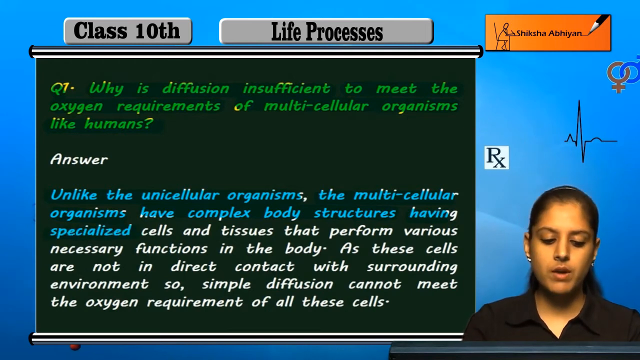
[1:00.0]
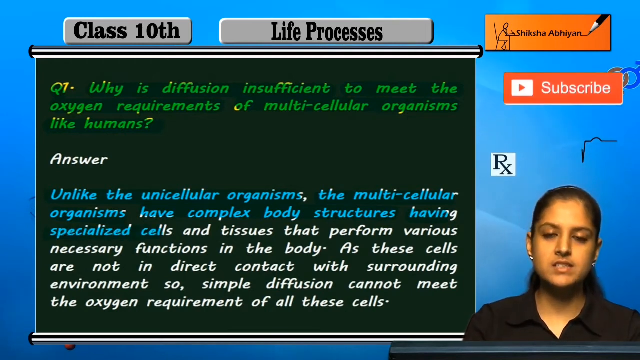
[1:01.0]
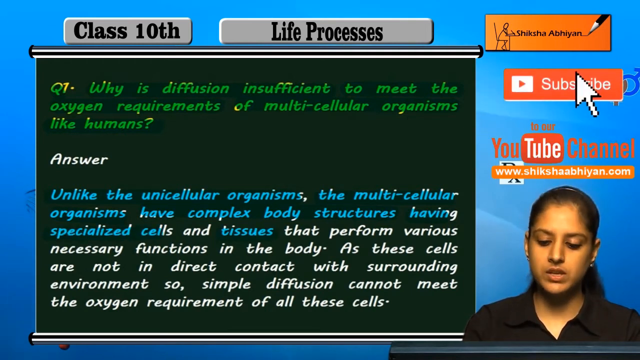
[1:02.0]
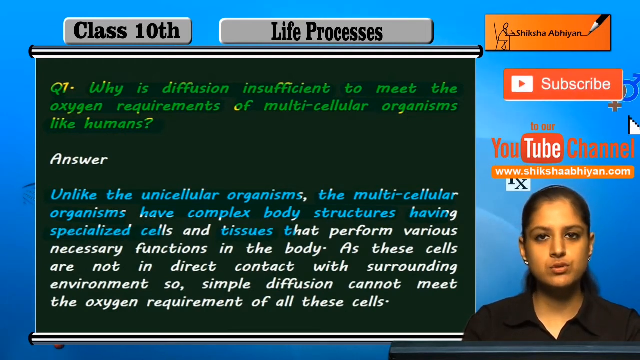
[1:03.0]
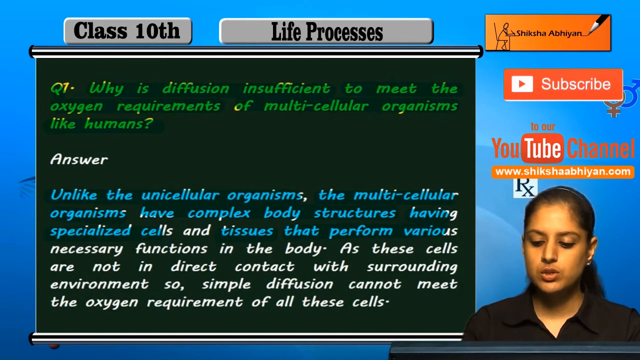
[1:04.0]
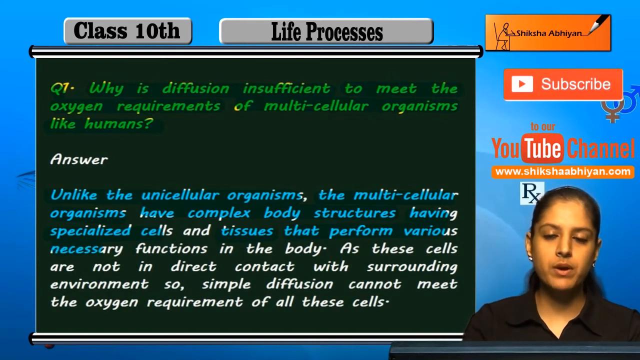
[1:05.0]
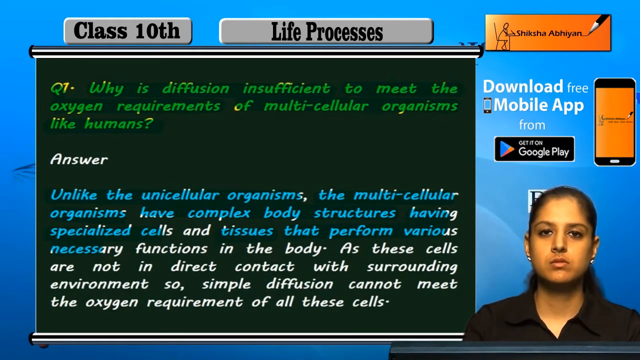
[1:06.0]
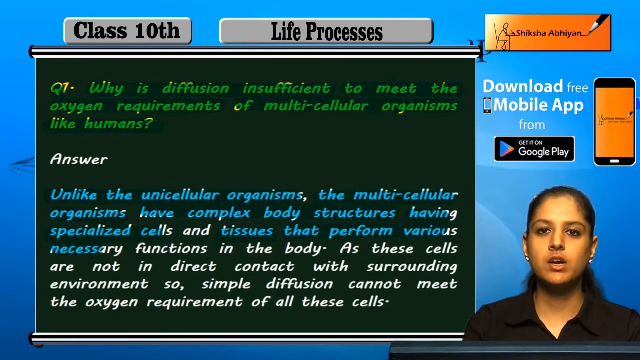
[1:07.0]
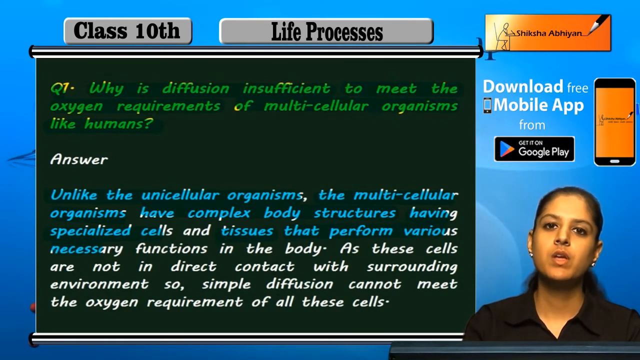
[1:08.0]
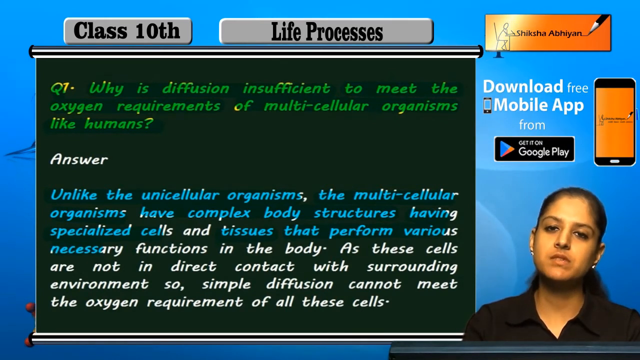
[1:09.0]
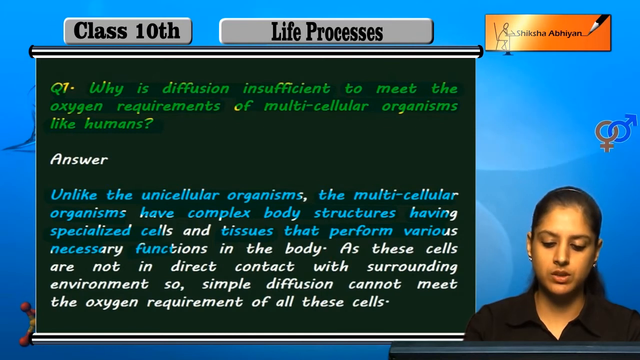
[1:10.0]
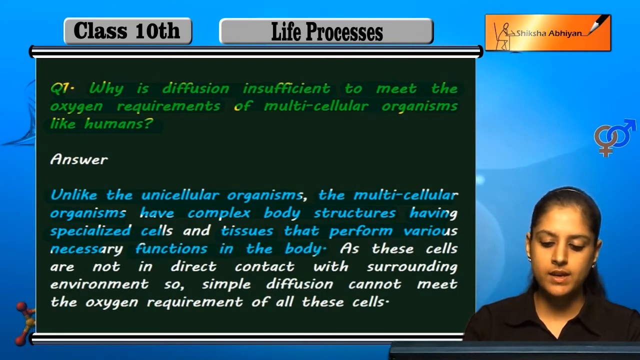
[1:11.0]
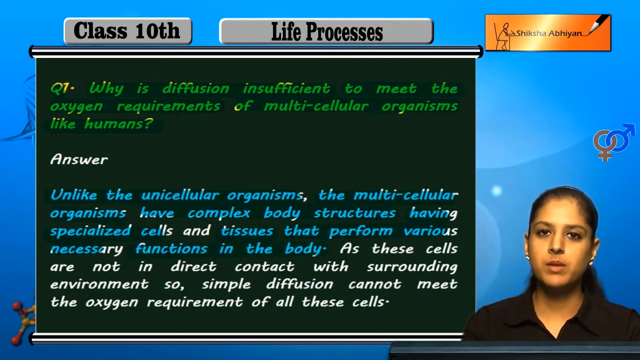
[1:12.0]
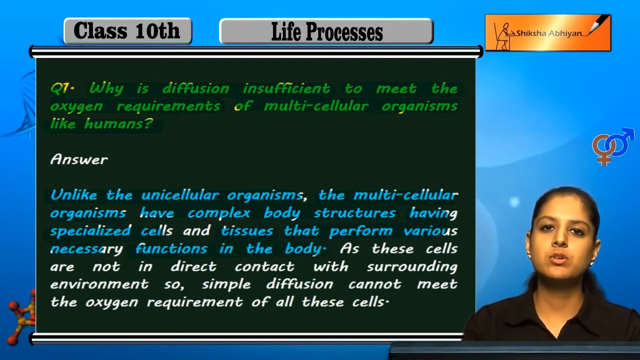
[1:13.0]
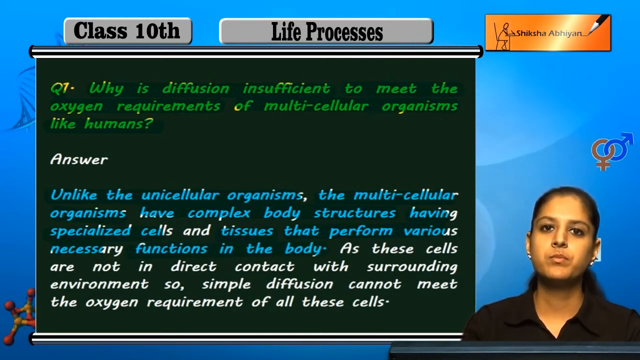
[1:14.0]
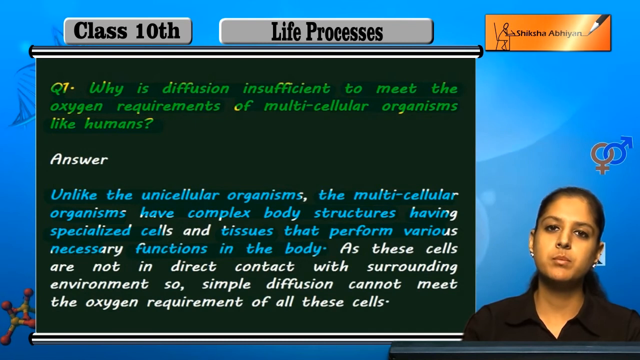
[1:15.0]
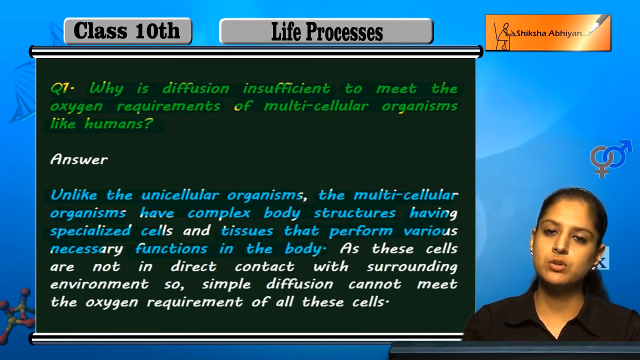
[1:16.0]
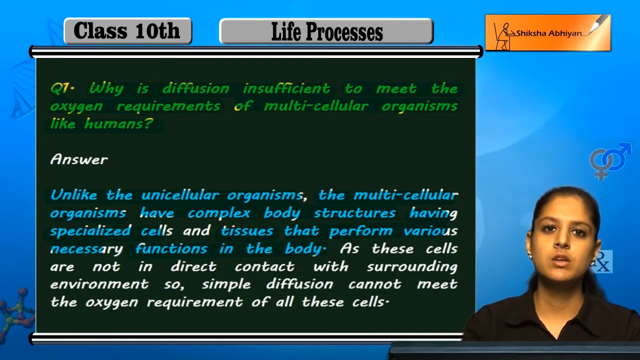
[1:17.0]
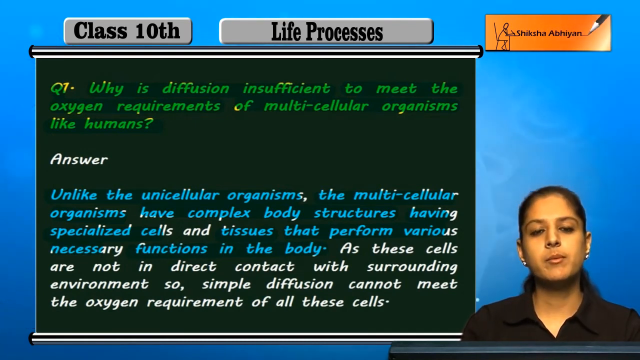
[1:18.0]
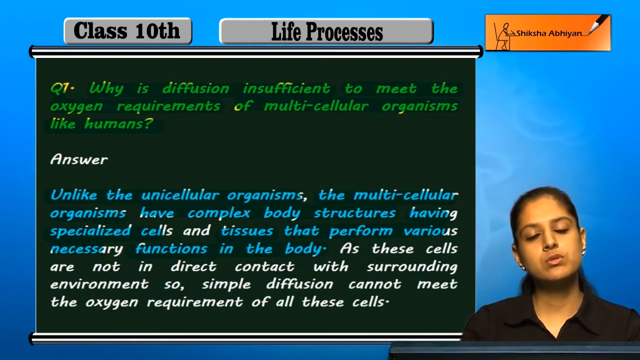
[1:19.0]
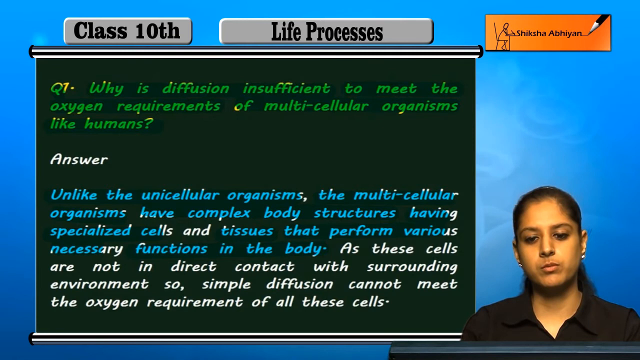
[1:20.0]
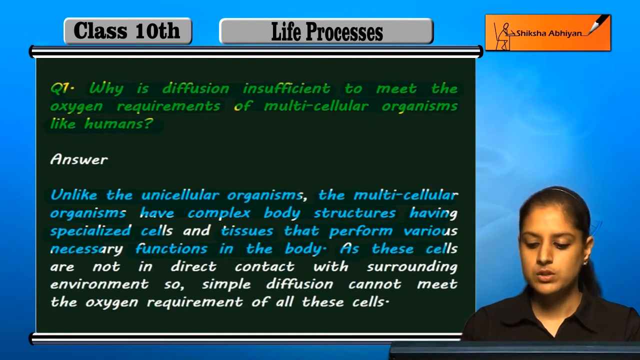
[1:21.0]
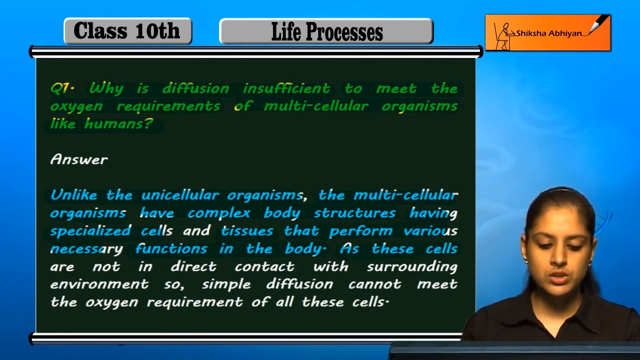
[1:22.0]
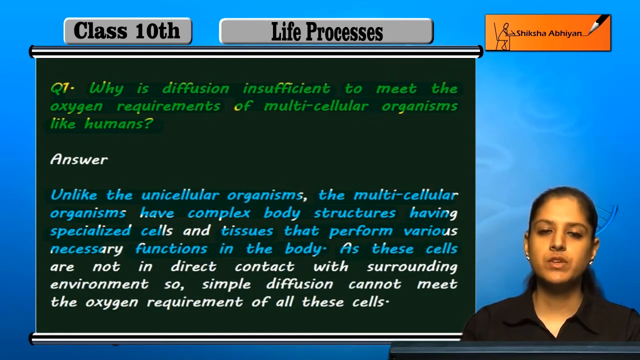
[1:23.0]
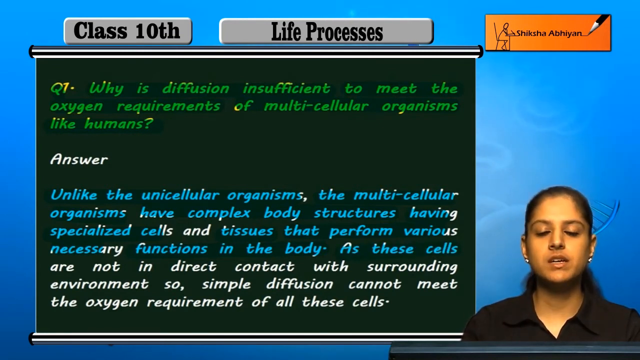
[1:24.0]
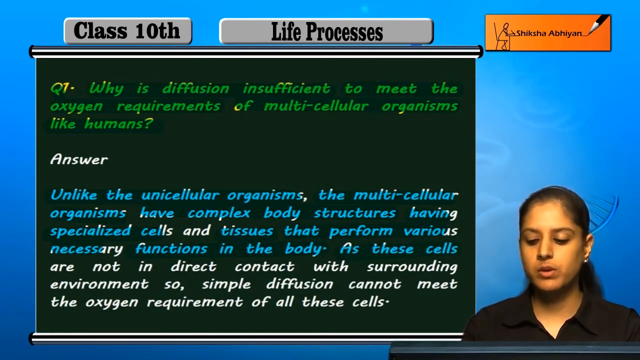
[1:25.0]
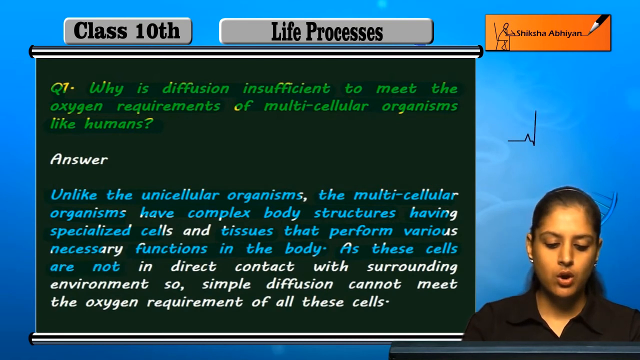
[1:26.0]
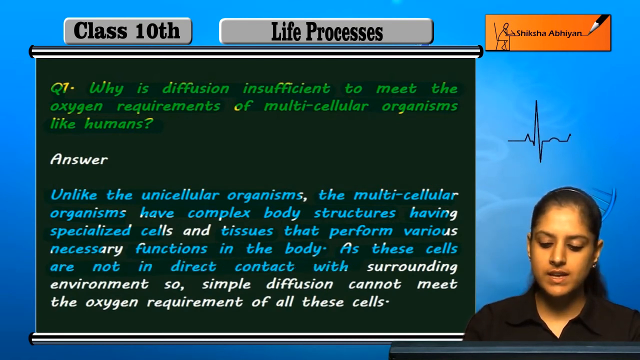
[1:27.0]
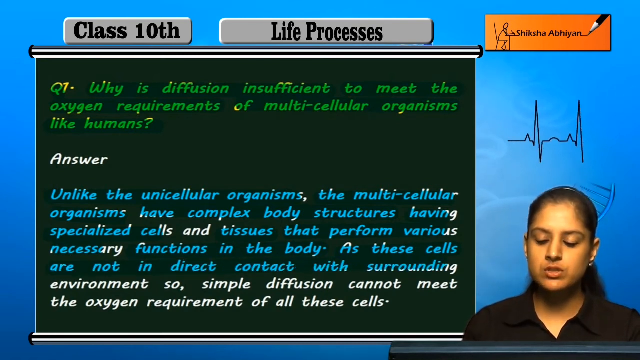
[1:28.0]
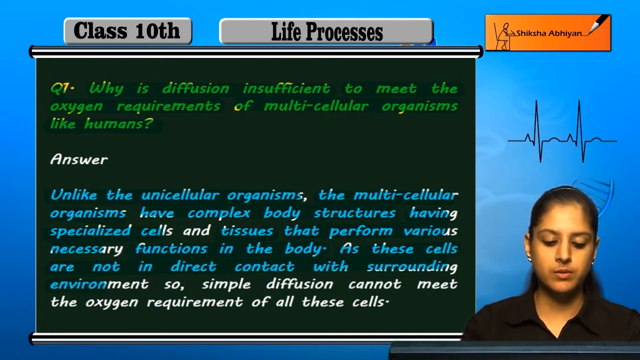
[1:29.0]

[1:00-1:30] The person continues giving instructions in the lower right part of the screen while small advertisements appear in the upper right. A YouTube button that says "subscribe" pops up, with "to our YouTube channel" below it, followed by the URL of the YouTube channel, which includes the channel name. The question on the screen asks about multicellular organisms like humans, apparently making this a biology lesson, and the person in the lower right is reading through the answer below the question. Another ad then pops up on the screen reading "download free mobile app from Google Play."